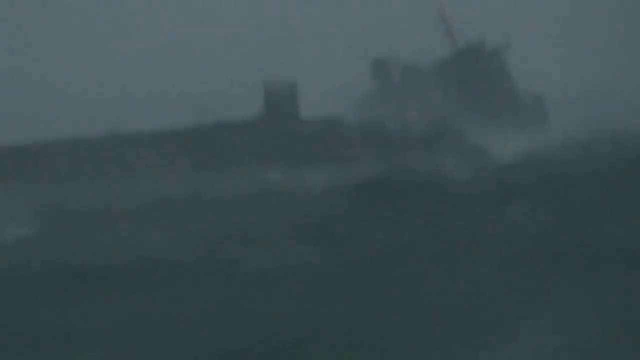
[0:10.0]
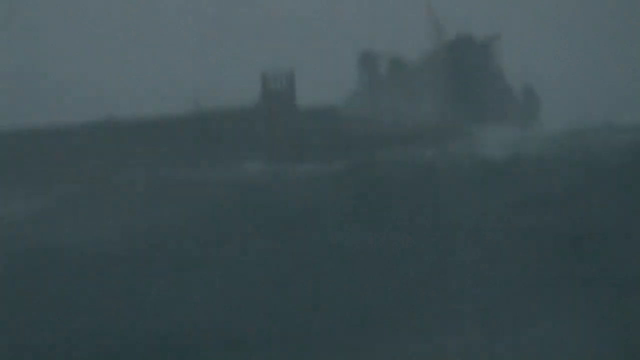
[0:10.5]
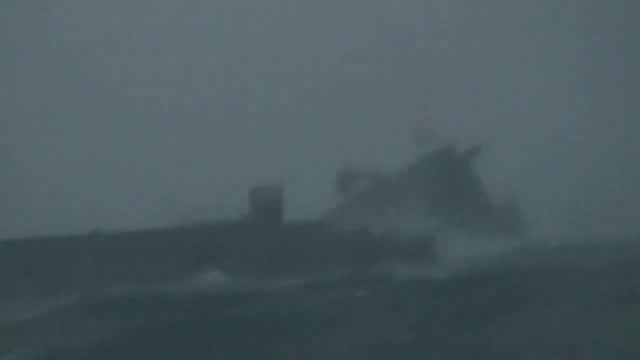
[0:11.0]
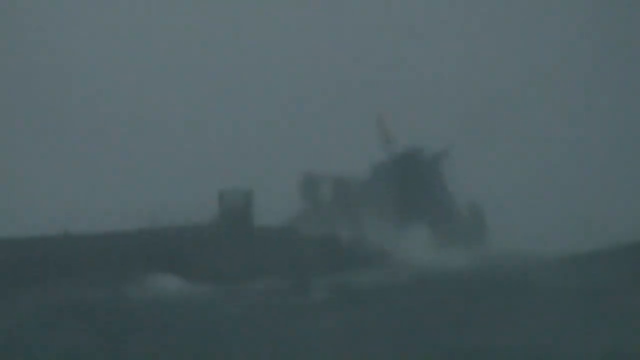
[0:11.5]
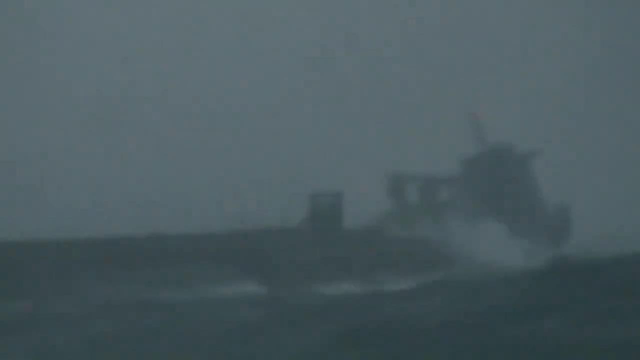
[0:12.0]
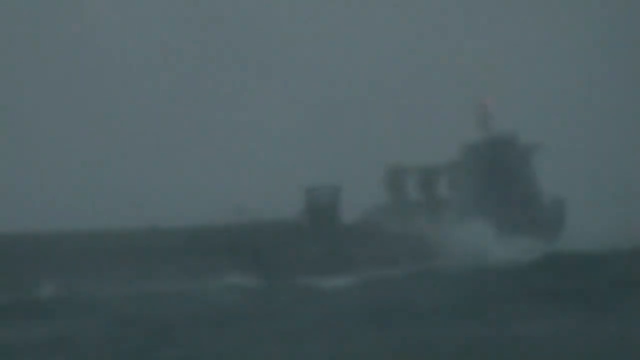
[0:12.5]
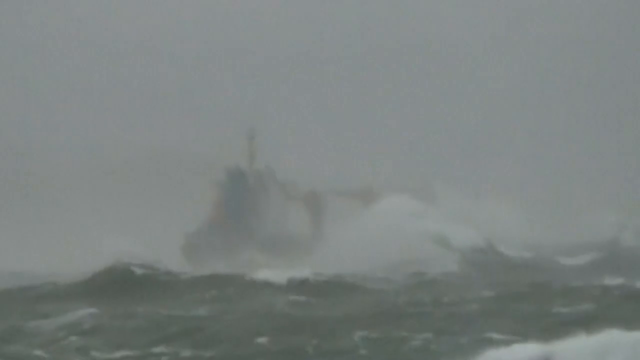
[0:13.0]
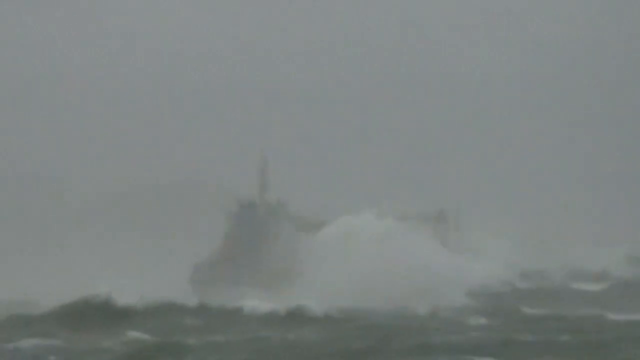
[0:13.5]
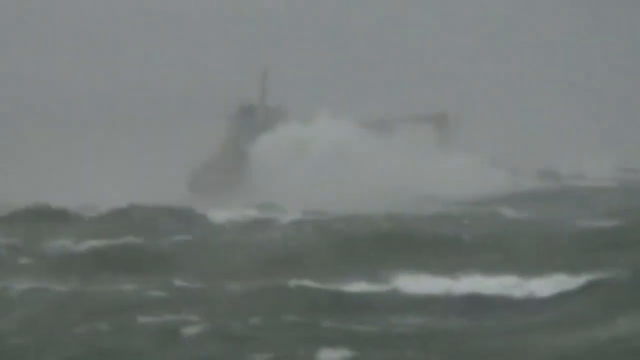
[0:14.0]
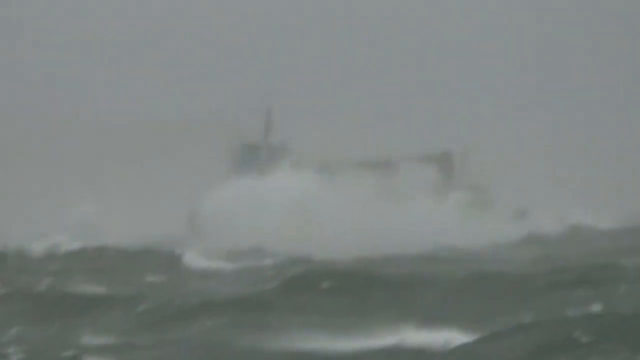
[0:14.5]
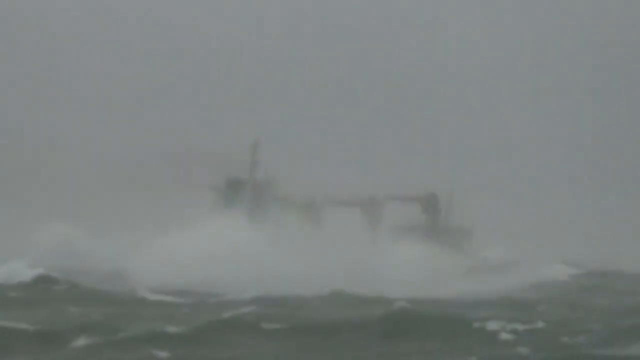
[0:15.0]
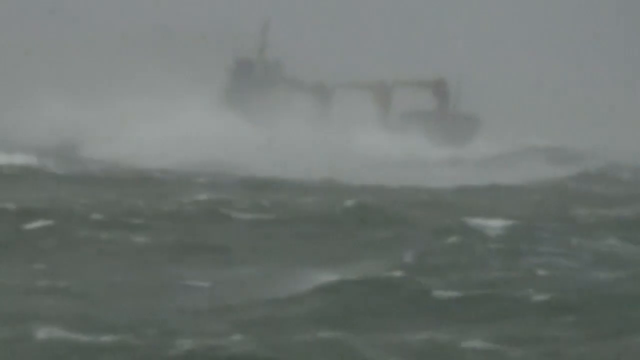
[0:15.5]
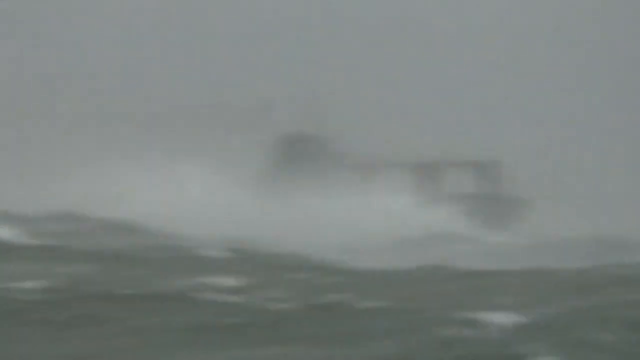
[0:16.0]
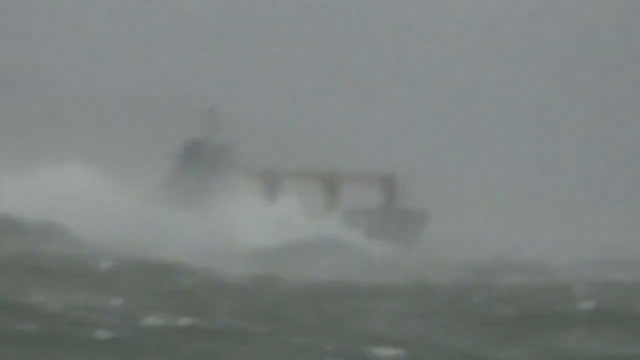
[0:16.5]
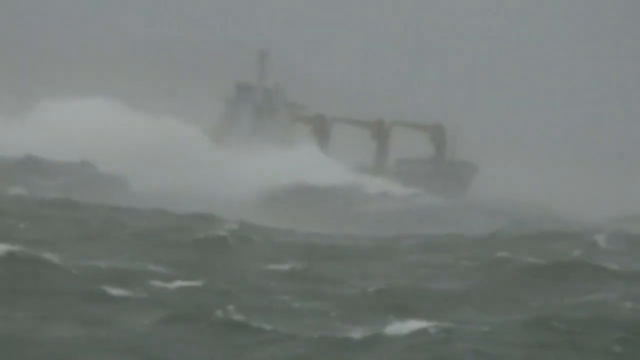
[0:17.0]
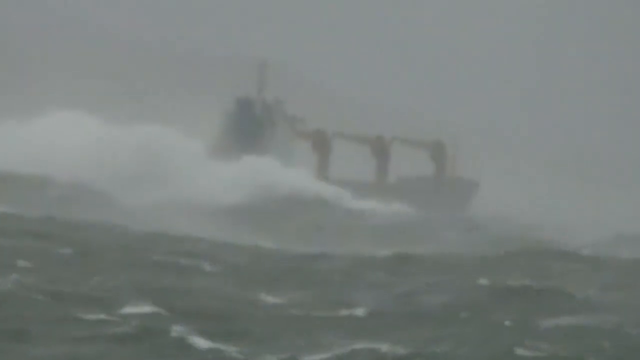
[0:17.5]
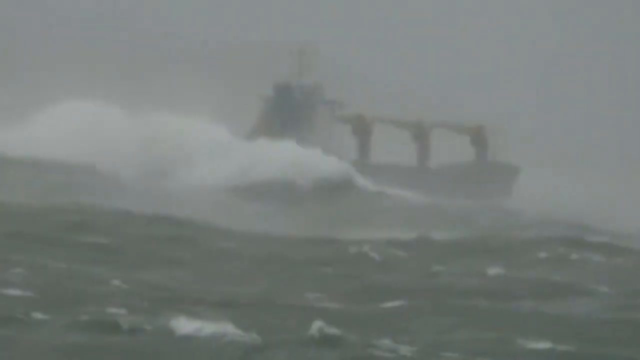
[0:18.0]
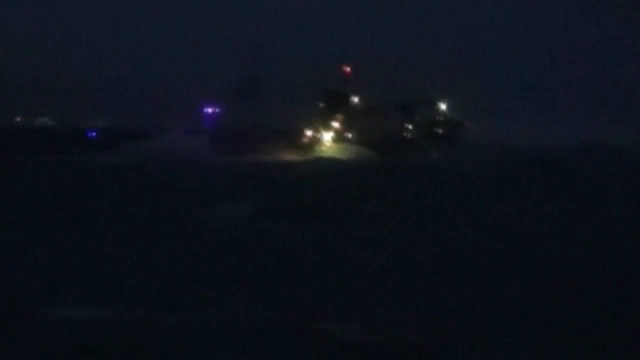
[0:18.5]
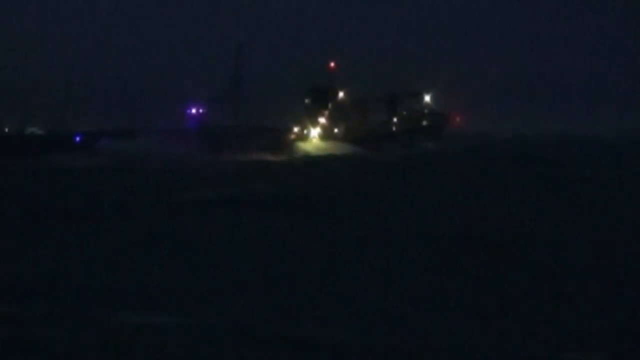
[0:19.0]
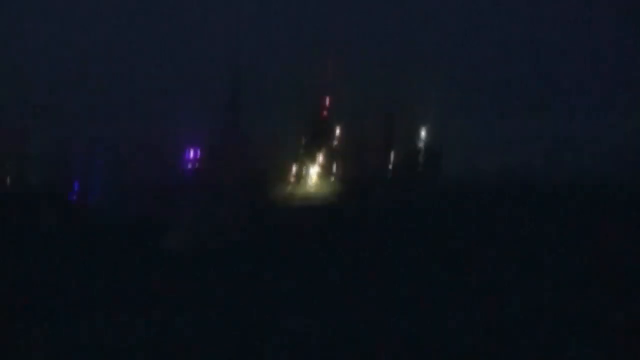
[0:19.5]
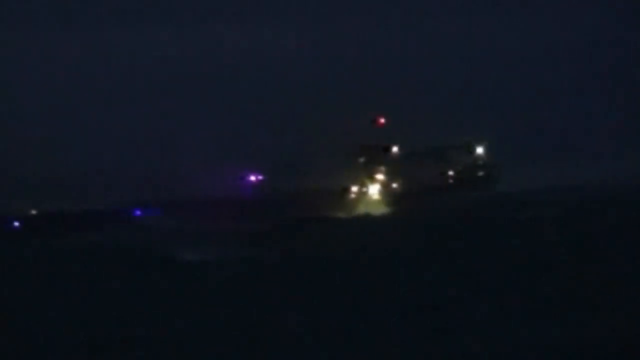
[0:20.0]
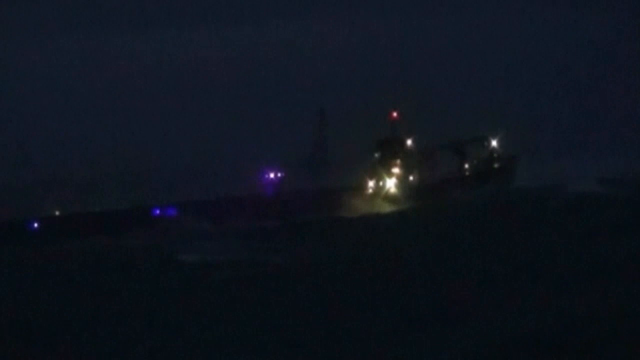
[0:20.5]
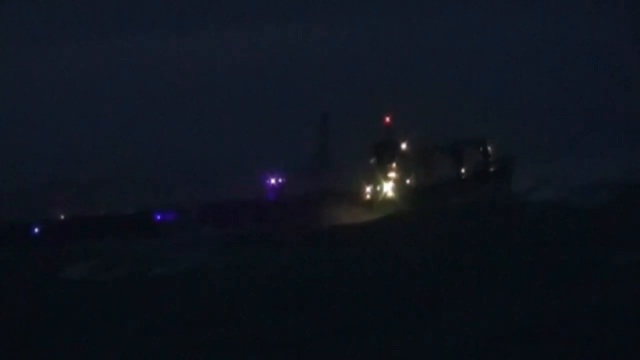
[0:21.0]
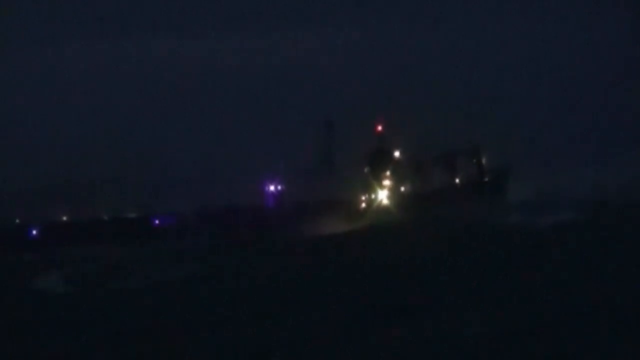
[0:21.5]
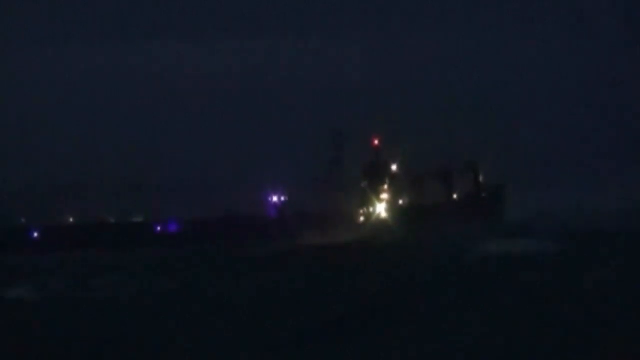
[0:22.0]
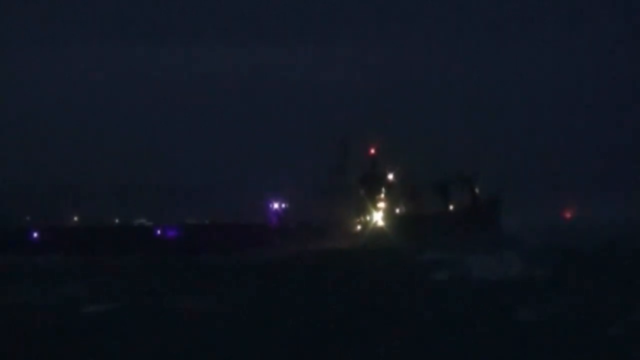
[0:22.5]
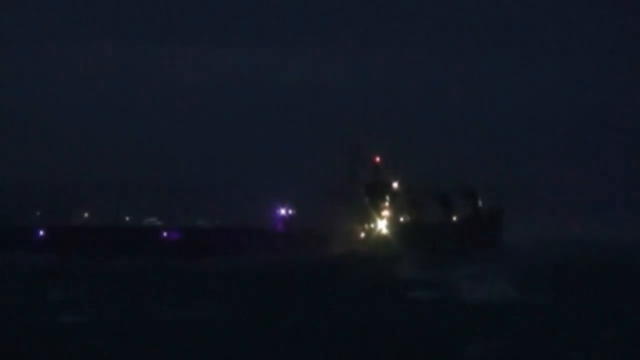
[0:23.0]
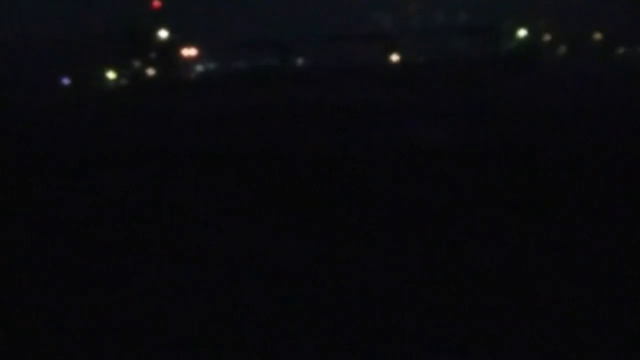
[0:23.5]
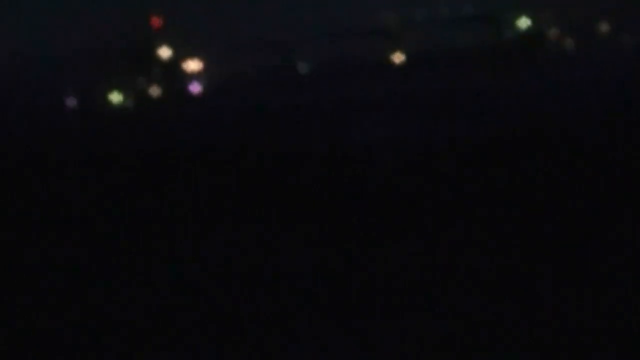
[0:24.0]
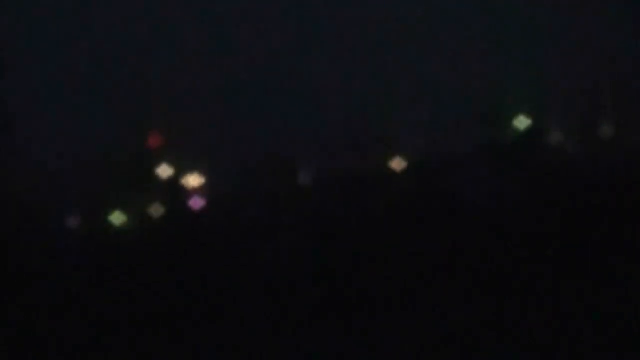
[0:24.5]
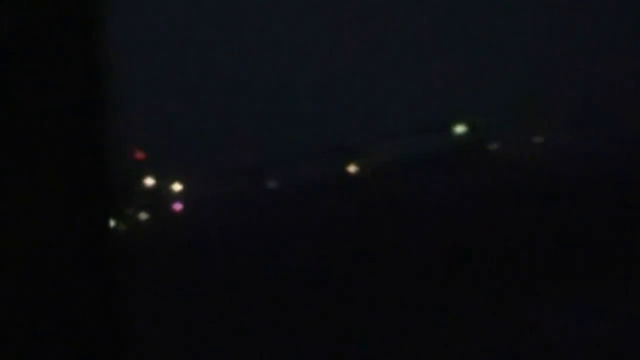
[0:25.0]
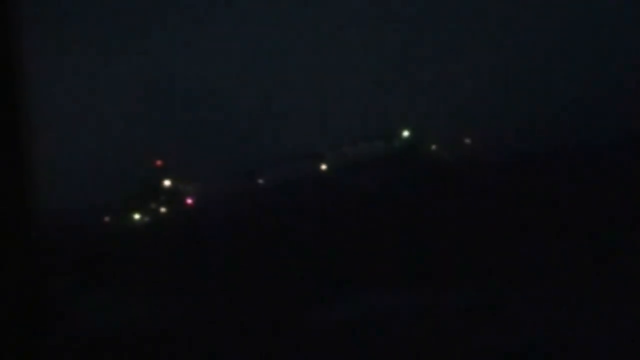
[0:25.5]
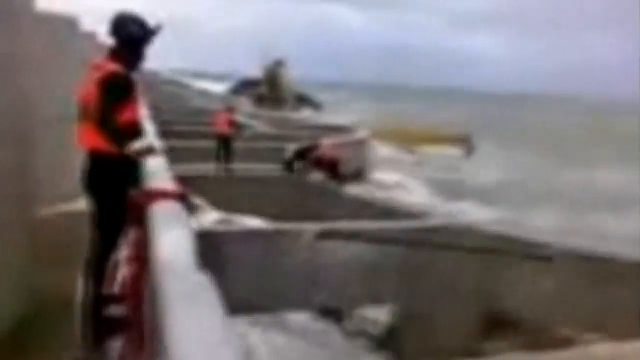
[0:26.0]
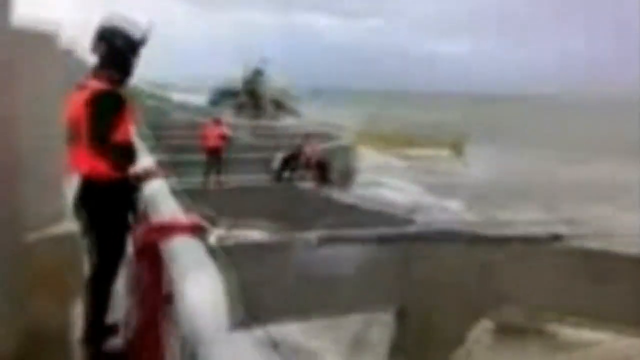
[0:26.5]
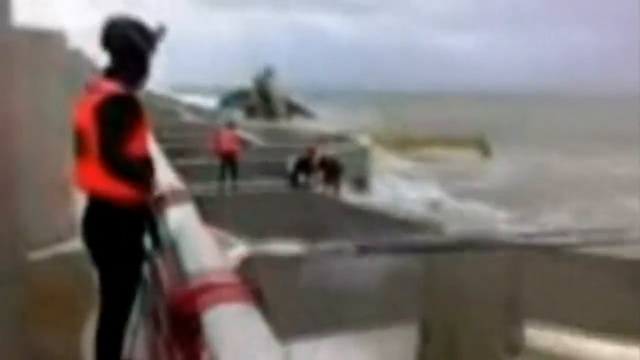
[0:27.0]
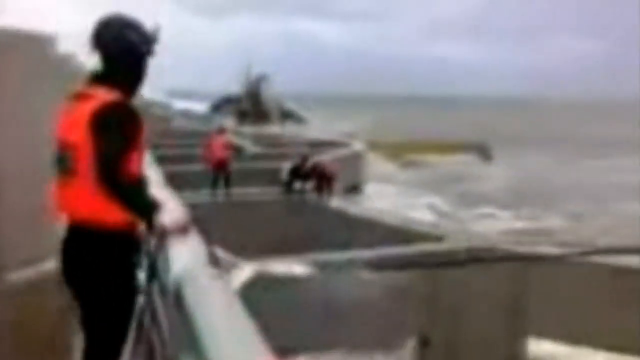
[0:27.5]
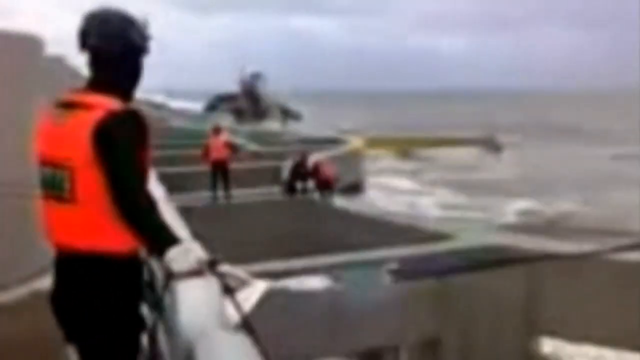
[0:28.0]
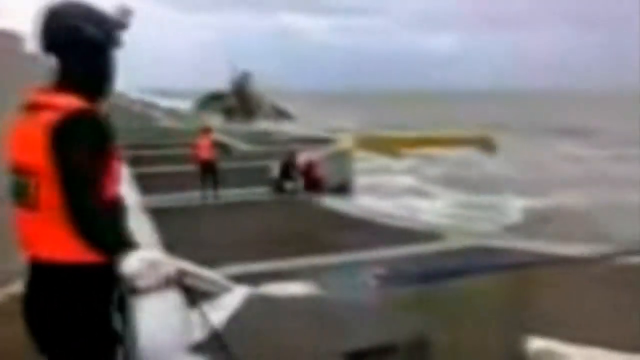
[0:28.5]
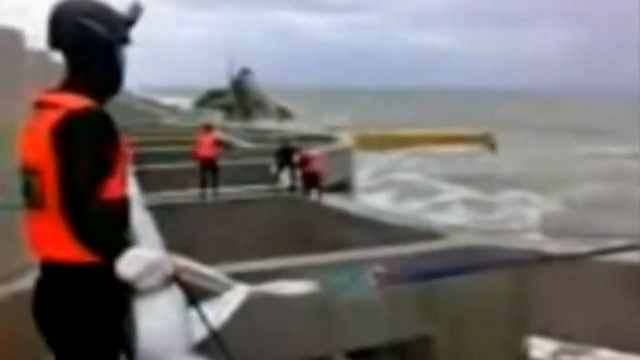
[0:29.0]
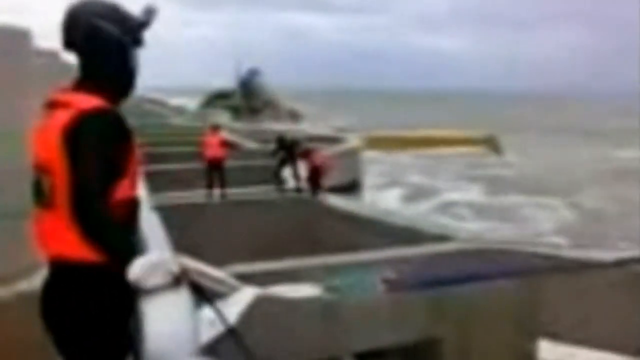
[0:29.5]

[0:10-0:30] The footage is very poor quality, blurry, grainy and hard to see. A boat is out in the middle of the ocean, and the very rough water rocks it backward and forward. Next comes a nighttime view in which mostly only lights are visible; the lights are on a boat in the ocean. Then a large ship appears, with someone standing at its railing wearing all black, including a black hat, and an orange vest. On a different level of the boat are three people: one in orange and two wearing black.